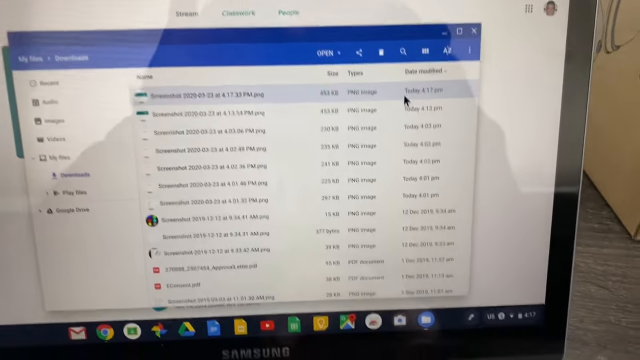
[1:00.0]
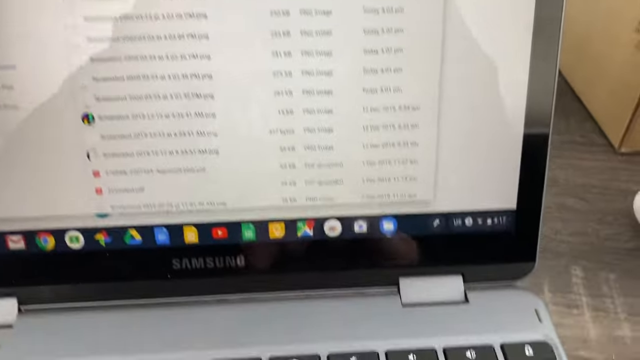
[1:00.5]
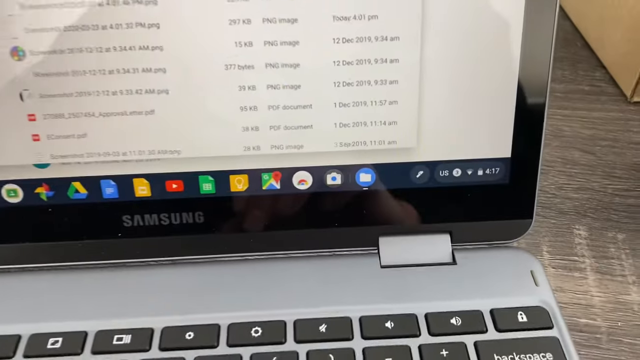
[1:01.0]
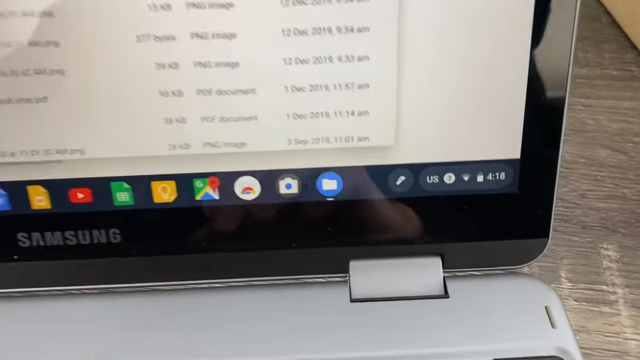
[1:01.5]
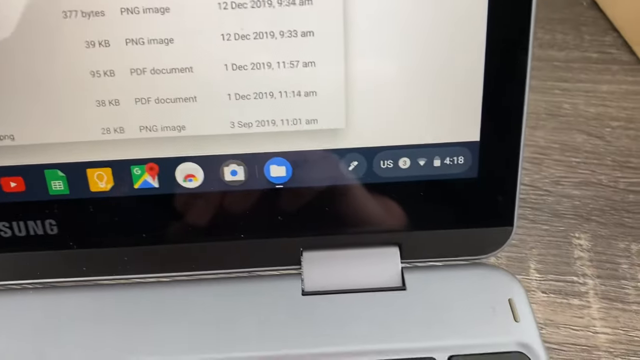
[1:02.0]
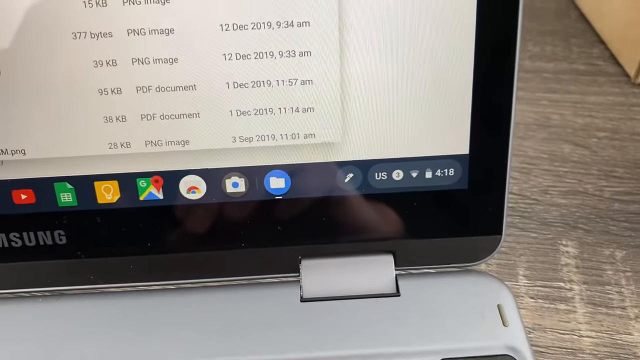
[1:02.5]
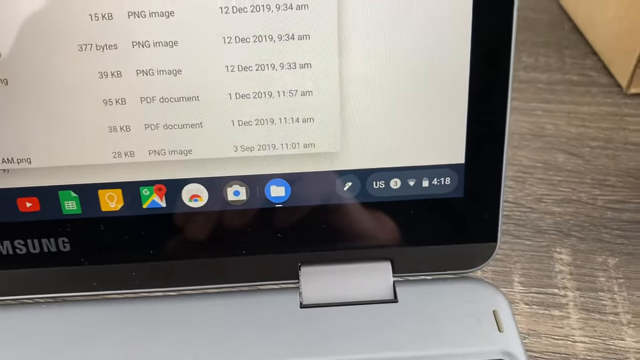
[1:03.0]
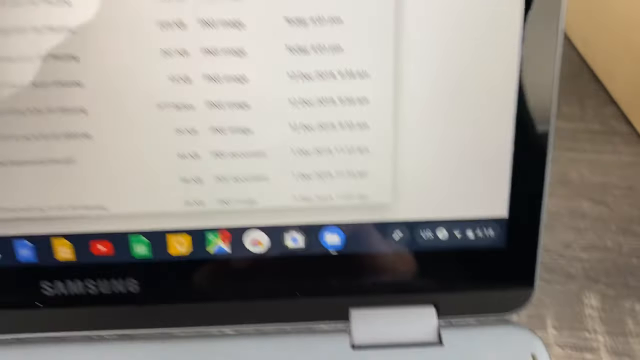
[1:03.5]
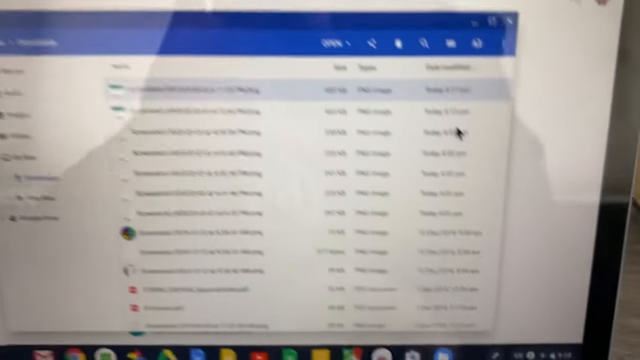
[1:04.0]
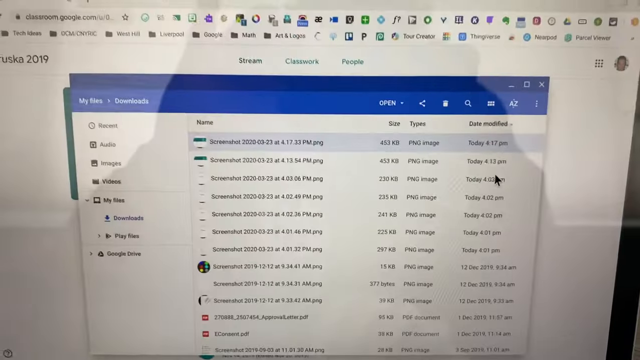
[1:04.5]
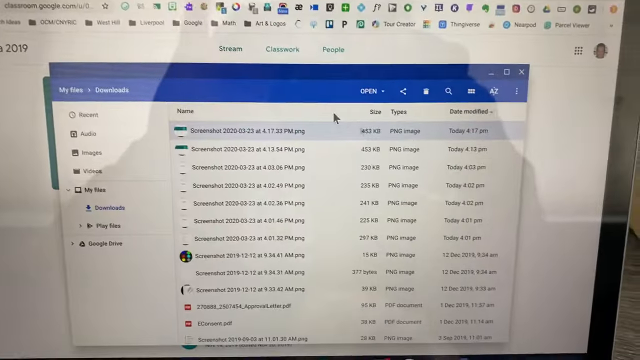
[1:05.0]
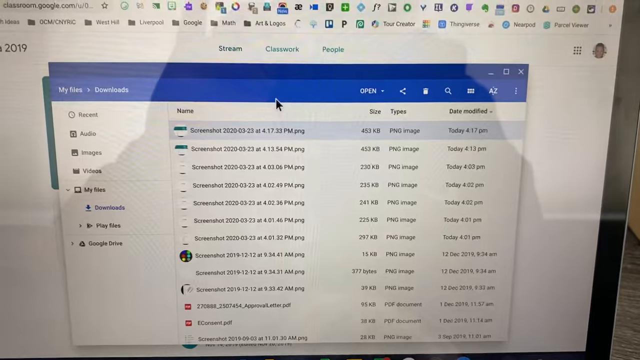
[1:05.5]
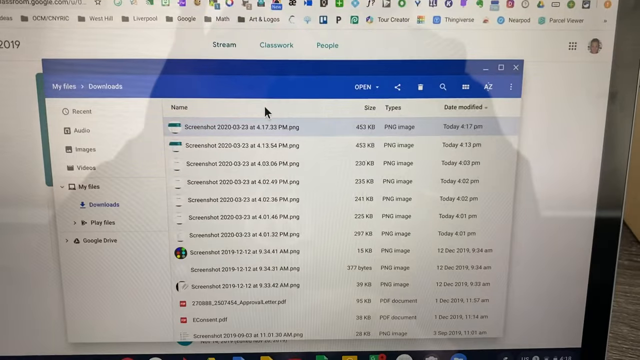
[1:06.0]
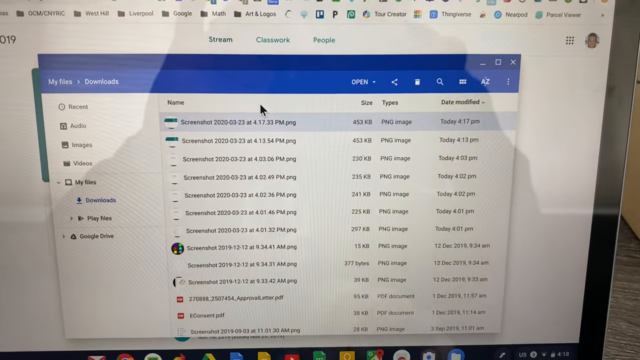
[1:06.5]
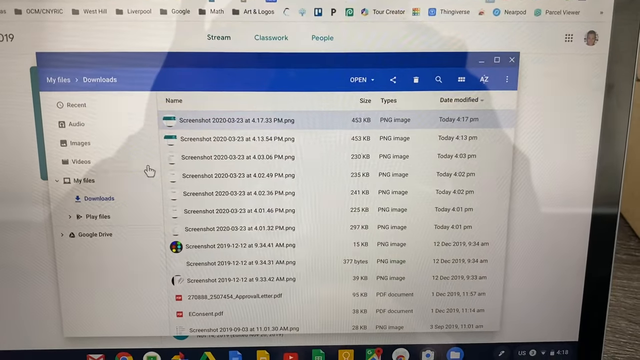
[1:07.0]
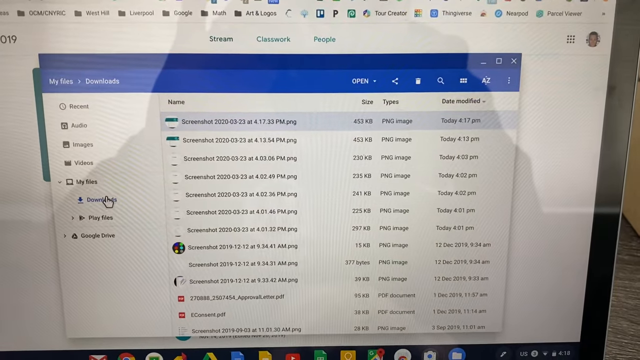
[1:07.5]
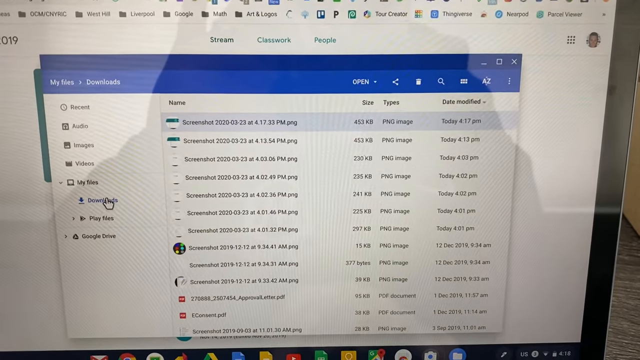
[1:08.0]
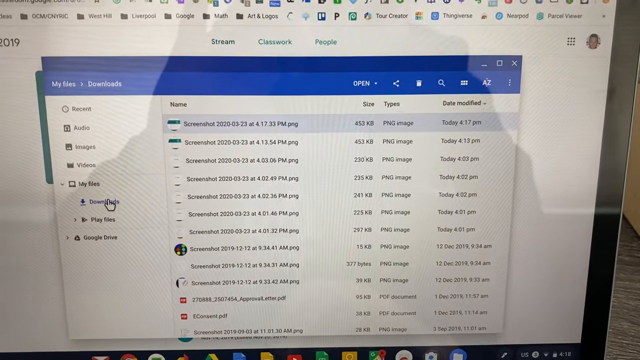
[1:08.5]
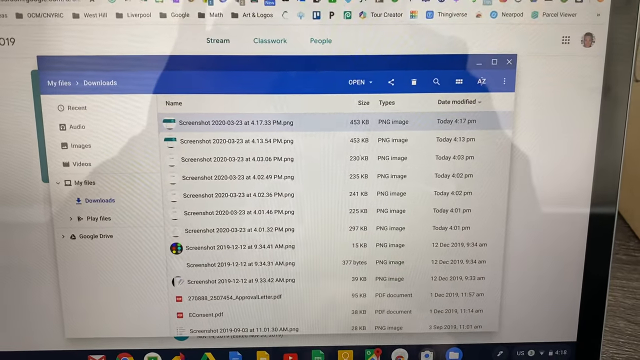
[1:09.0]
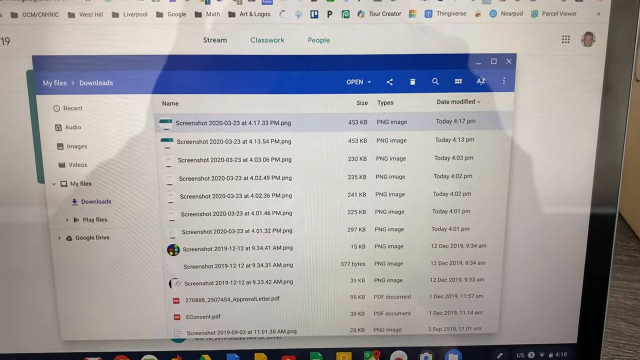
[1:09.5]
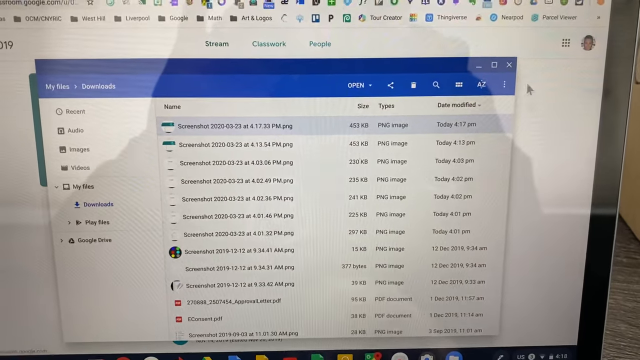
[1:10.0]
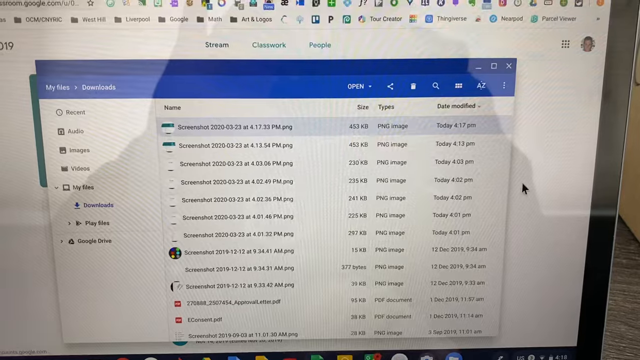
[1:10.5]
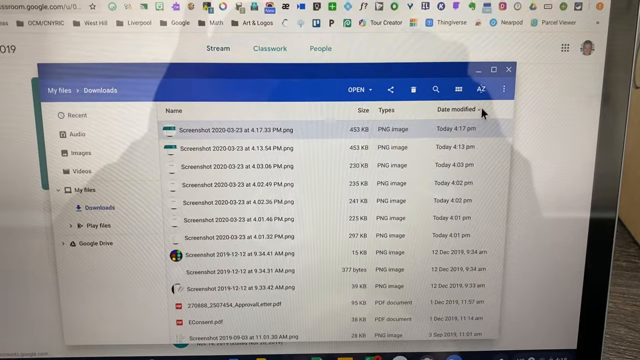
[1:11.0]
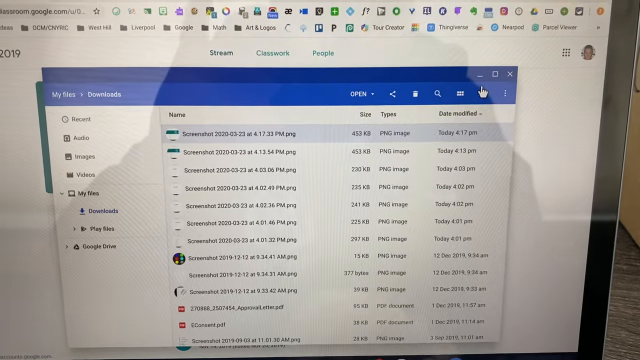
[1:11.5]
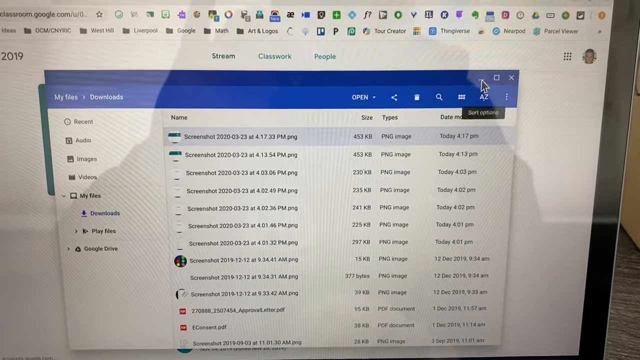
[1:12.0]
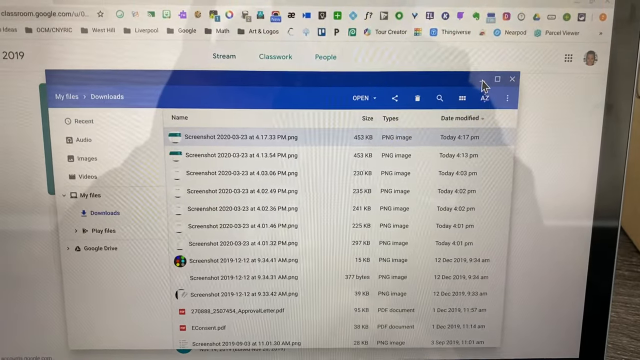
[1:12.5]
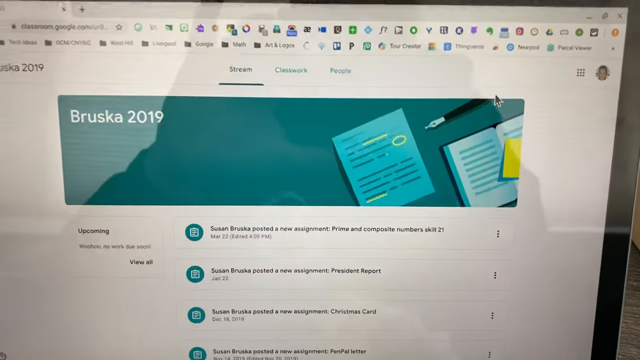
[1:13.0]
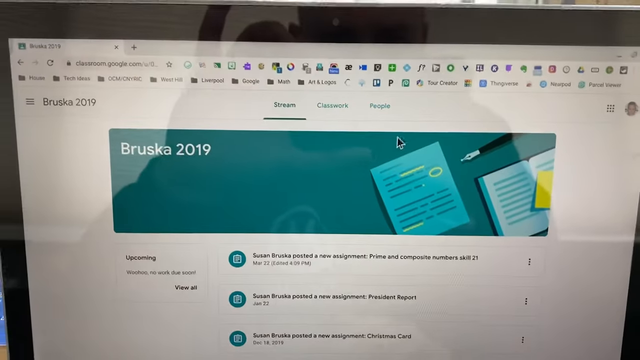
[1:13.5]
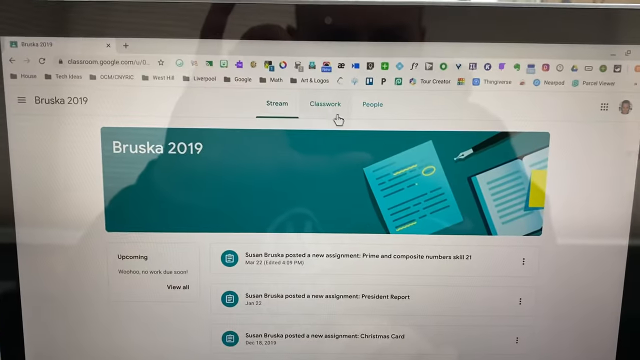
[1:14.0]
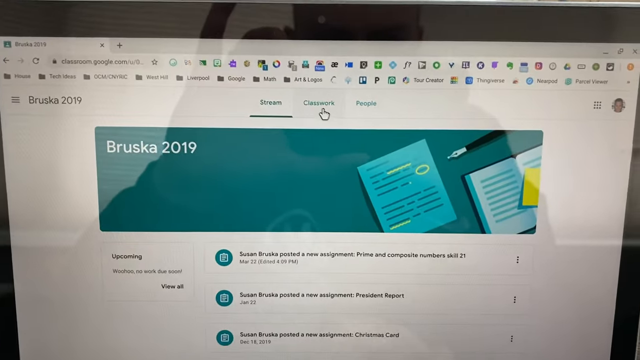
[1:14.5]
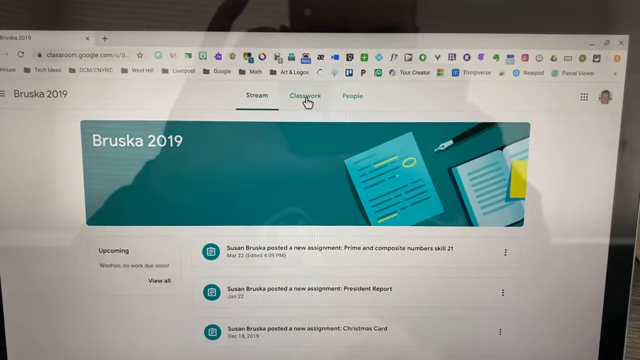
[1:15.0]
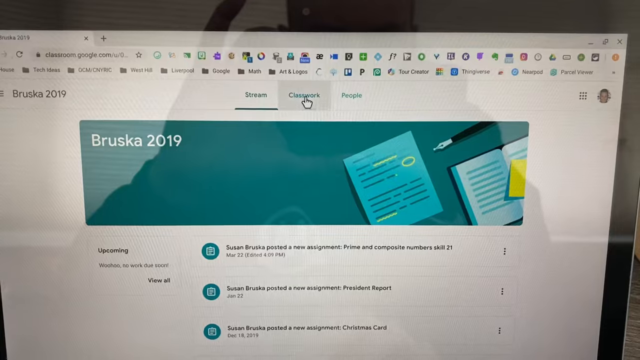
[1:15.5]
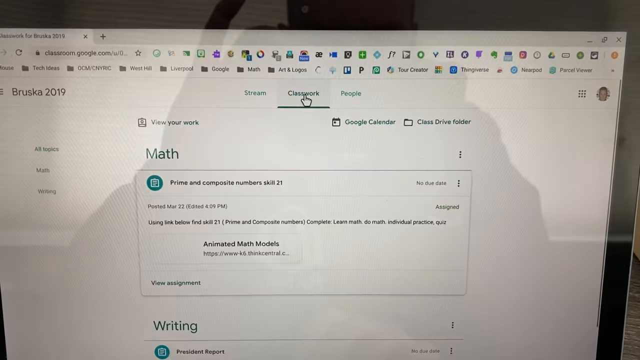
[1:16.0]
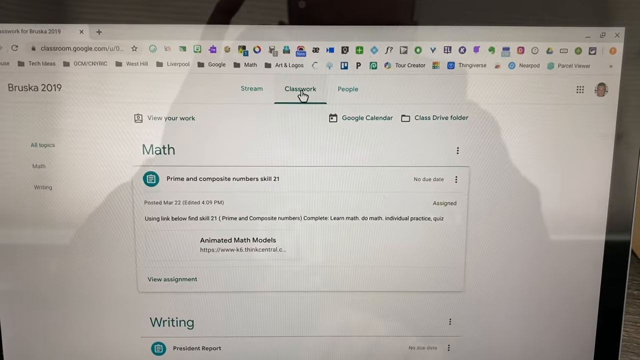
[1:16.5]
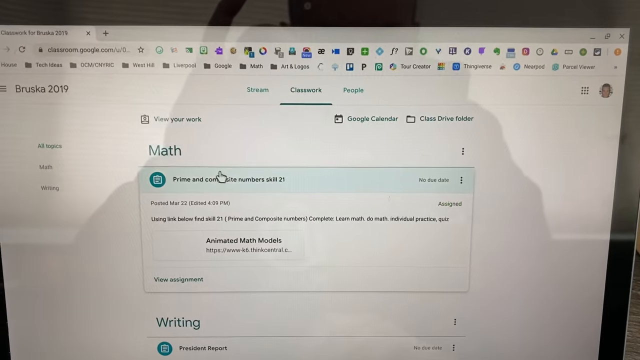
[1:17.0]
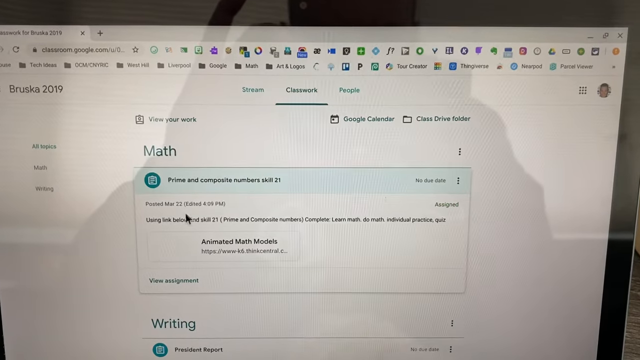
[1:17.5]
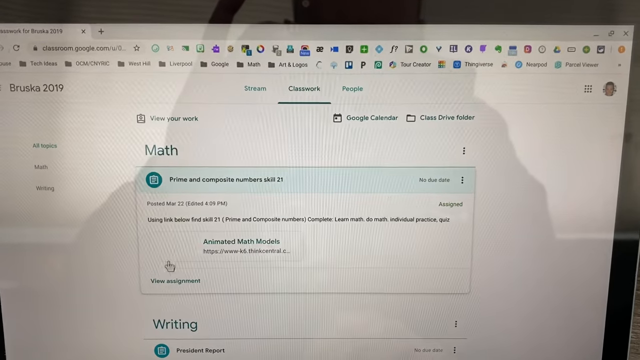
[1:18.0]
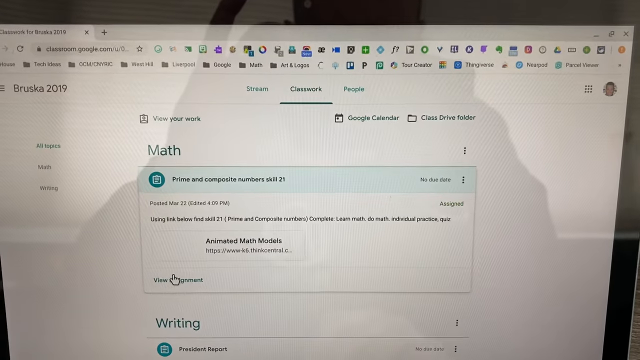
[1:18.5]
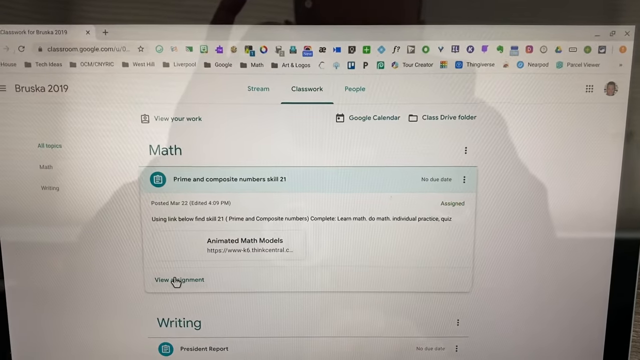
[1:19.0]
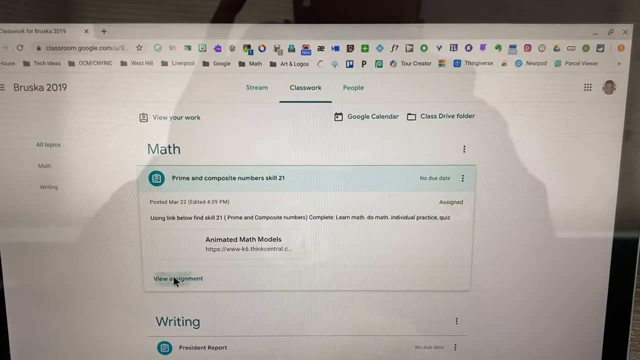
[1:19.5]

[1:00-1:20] The time is shown, reading today at 4:17, and then the view zooms in on the computer's clock, which shows 4:18, apparently to confirm that this is the screenshot just saved. The window is minimized, and then a tab called "Classwork" is clicked, followed by "View Assignment". This appears to be part of a tutorial, possibly to help people with schoolwork.